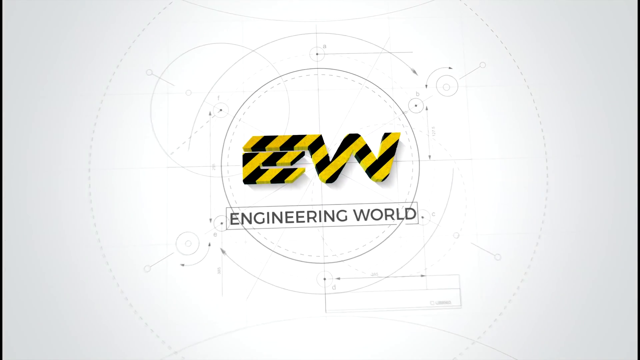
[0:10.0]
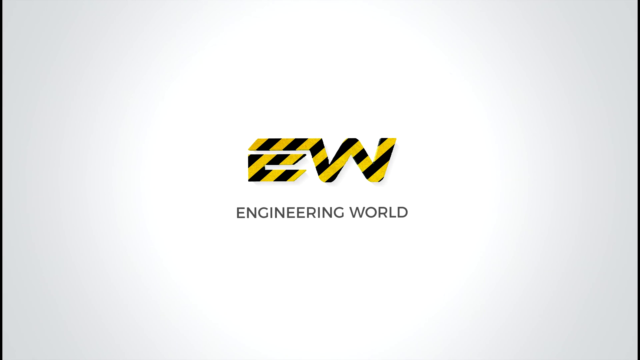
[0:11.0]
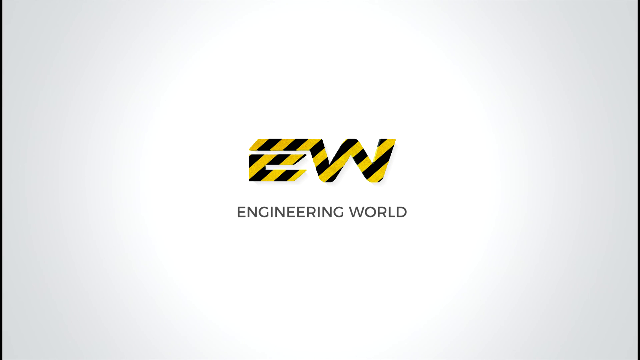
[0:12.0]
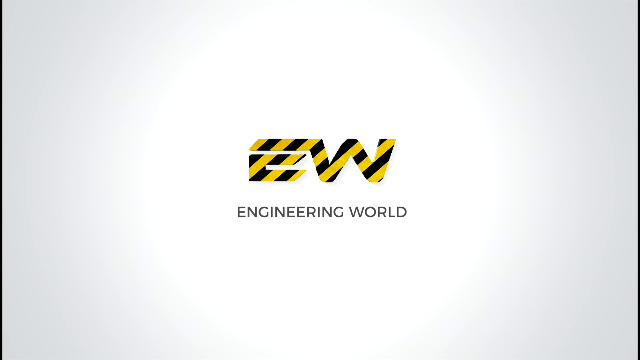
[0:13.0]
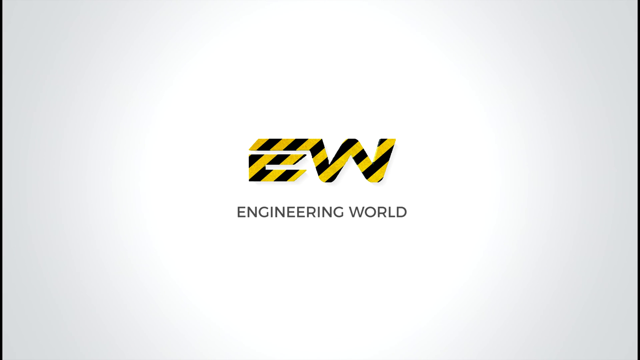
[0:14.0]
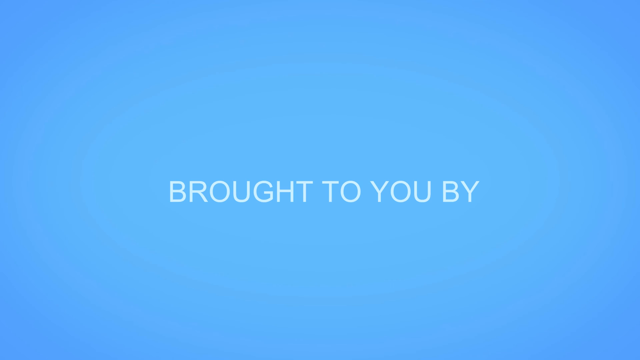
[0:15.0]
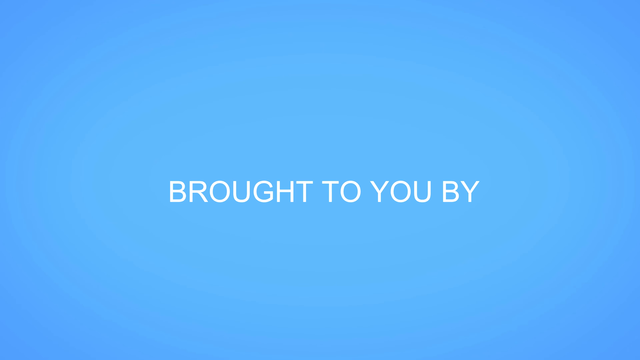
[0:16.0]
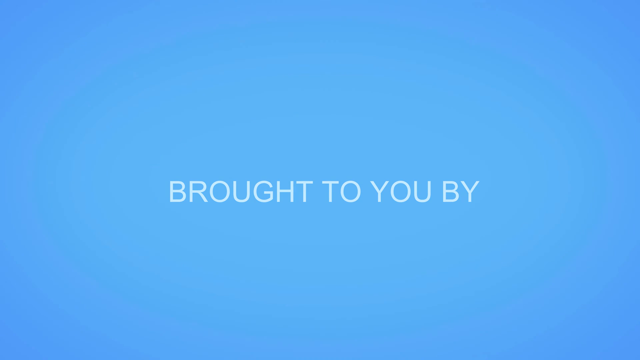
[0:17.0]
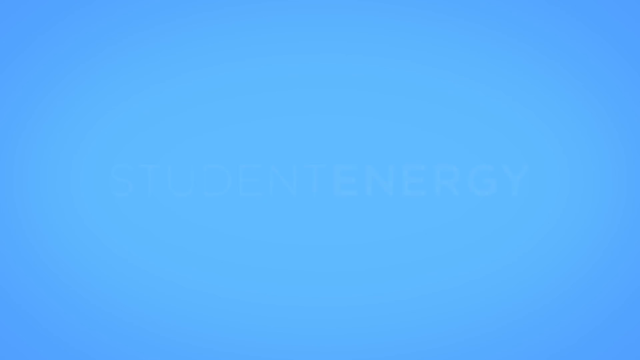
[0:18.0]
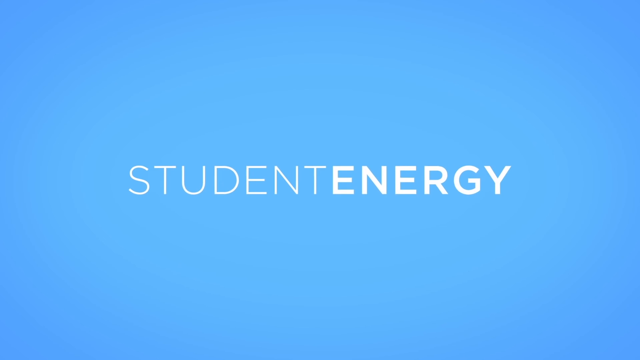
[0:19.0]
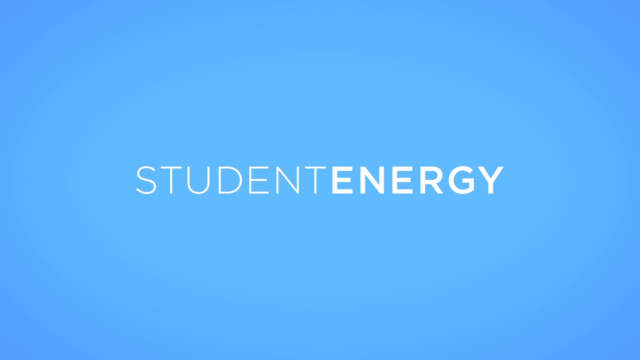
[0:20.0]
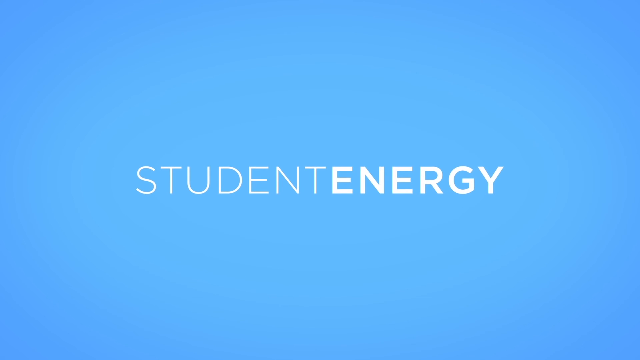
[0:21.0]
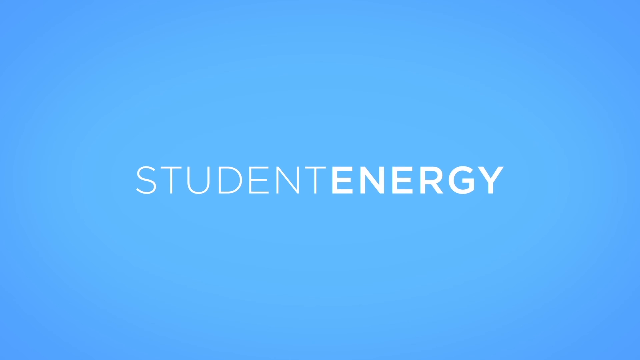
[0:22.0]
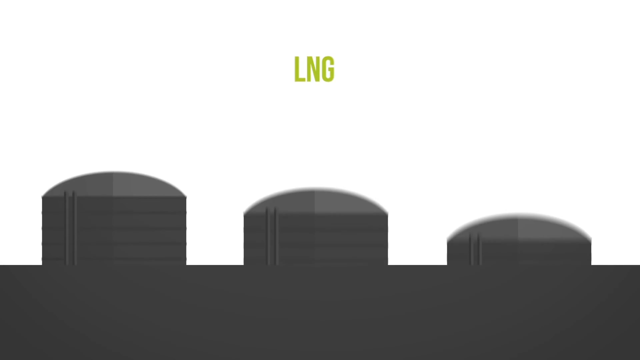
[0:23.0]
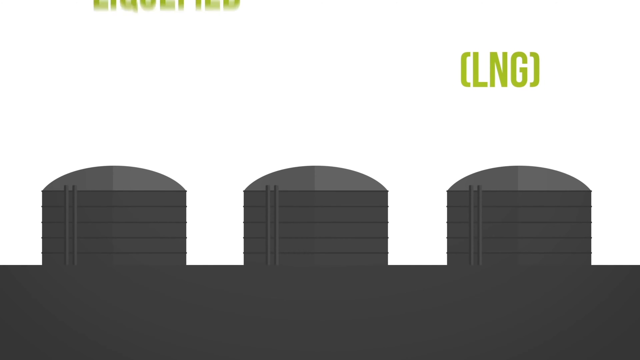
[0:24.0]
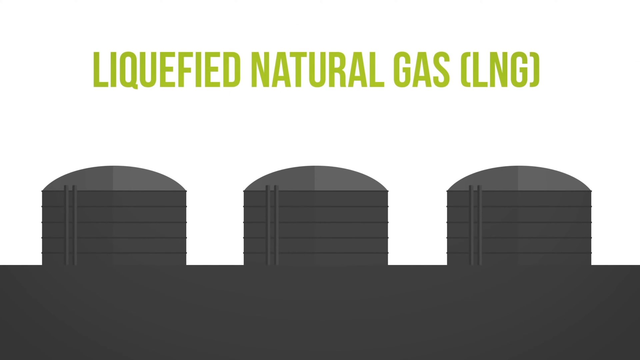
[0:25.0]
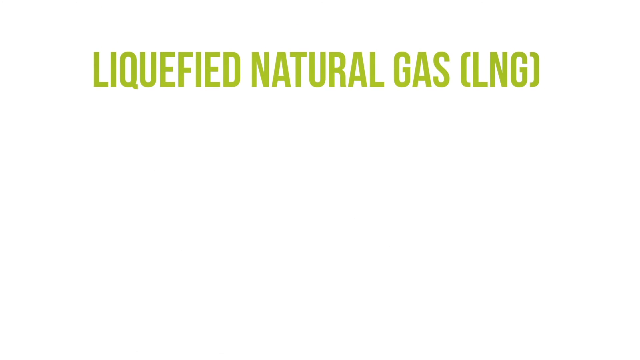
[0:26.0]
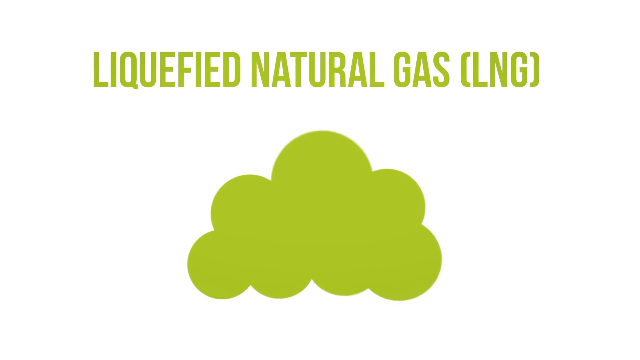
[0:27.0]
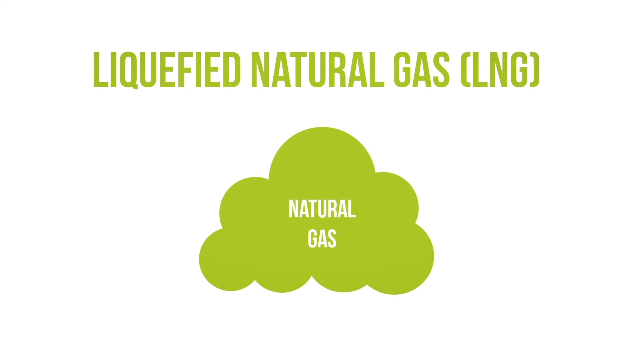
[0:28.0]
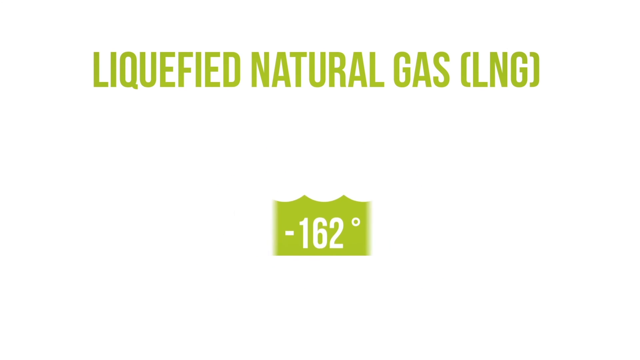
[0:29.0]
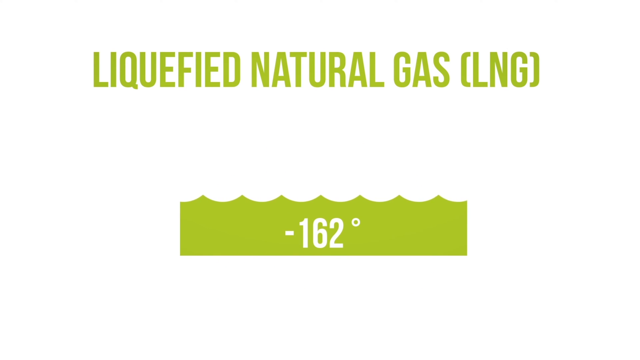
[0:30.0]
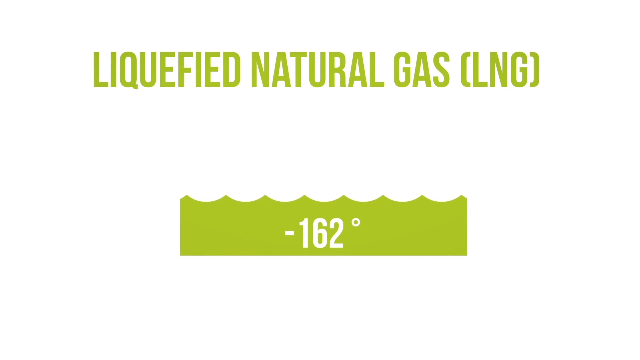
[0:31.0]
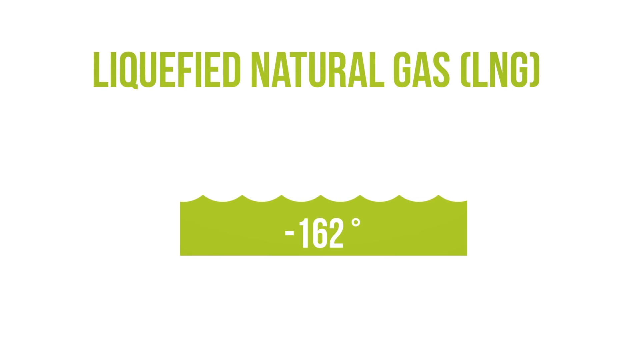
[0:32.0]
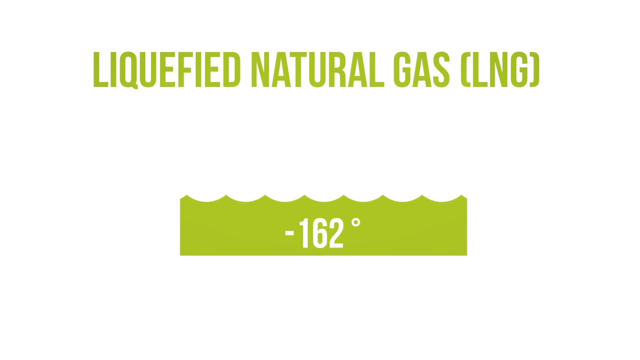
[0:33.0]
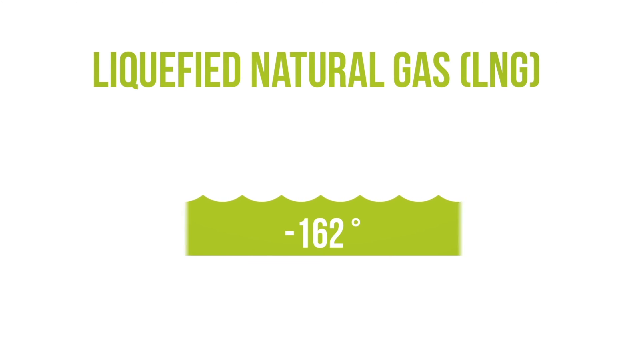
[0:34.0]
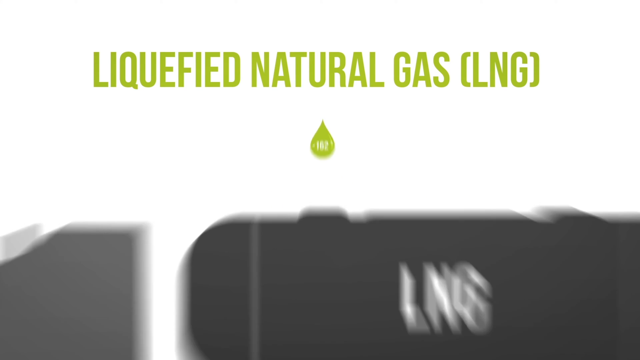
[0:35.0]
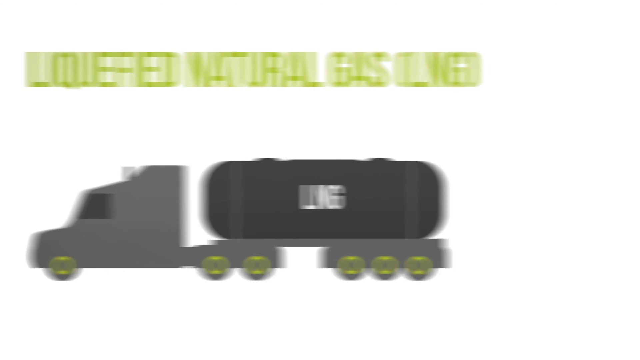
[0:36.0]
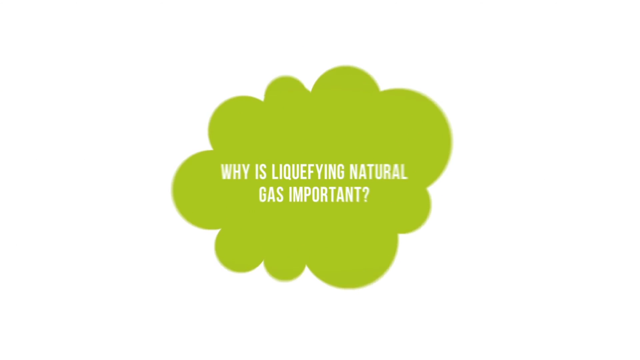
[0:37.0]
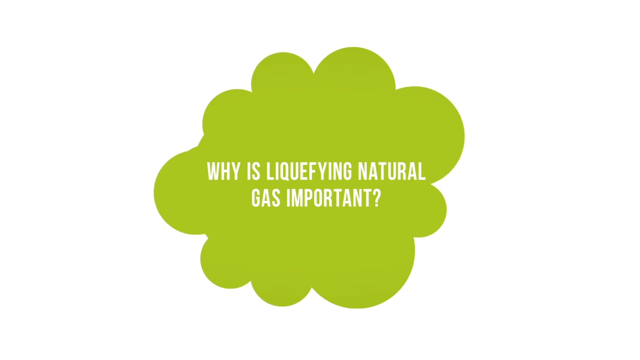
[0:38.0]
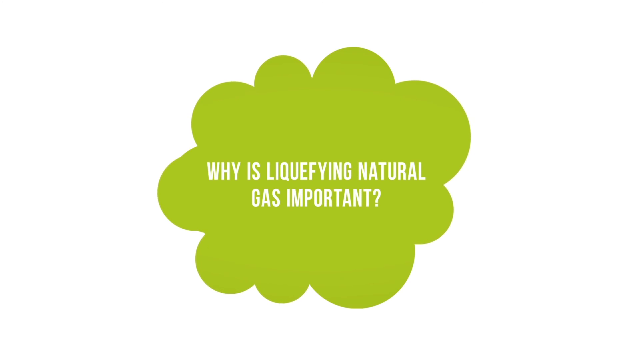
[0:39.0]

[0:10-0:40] The "EW Engineering World" logo appears, with the EW in yellow and black and circles around it. A blue screen follows with the text "brought to you by Student Energy". Next, text reads "LNG liquefied natural gas" beside three storage cans or barns, then "natural gas negative 162 degrees". Something like a little bit of water flows in green, followed by a drop, and then an 18-wheeler marked "LNG" appears, apparently carrying liquefied natural gas in its cargo. Text then asks "why is liquefying natural gas important".